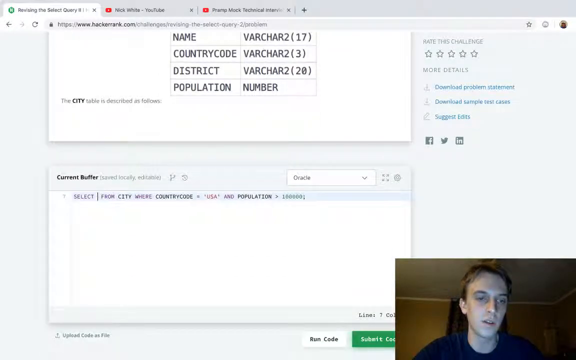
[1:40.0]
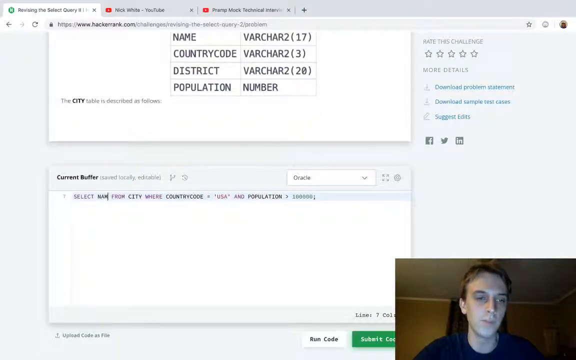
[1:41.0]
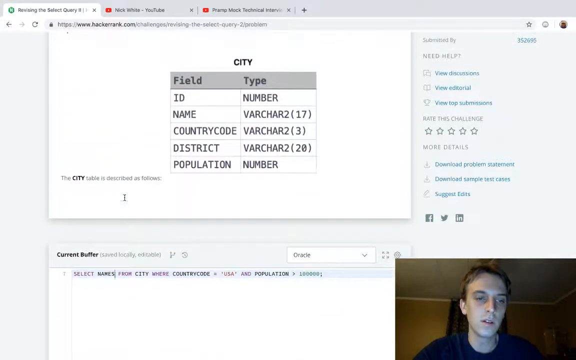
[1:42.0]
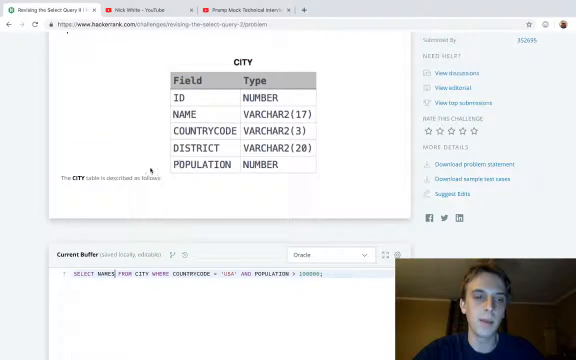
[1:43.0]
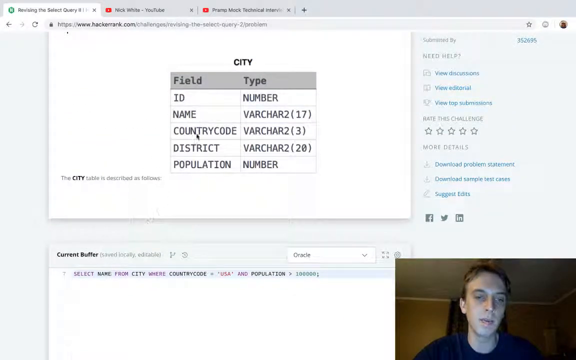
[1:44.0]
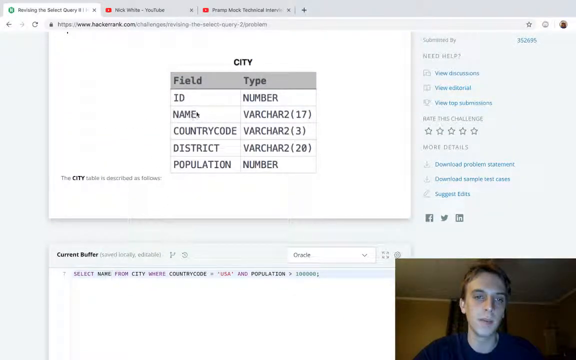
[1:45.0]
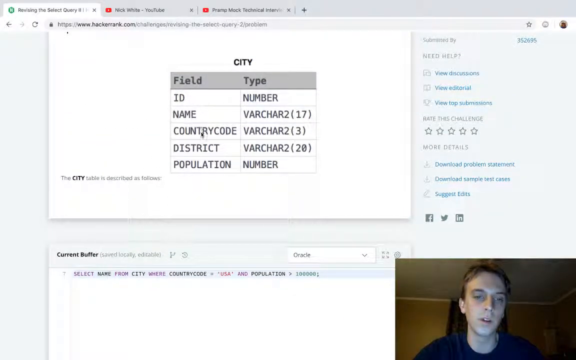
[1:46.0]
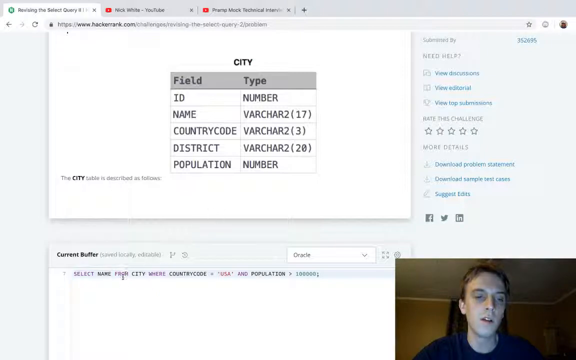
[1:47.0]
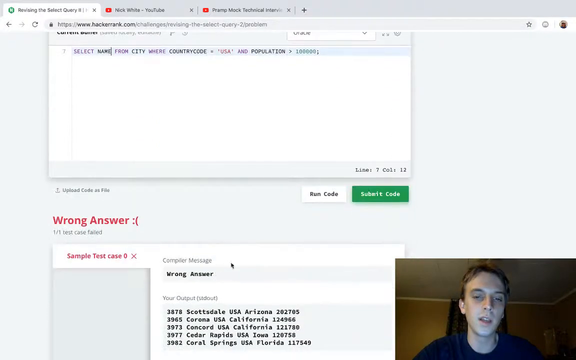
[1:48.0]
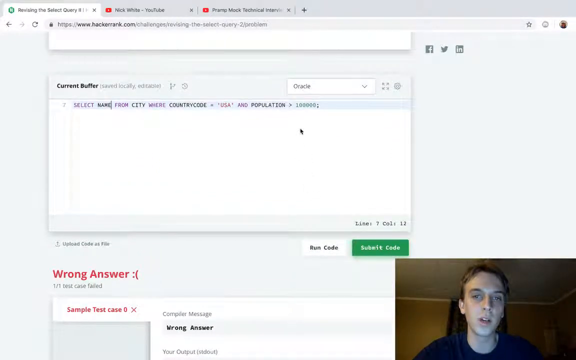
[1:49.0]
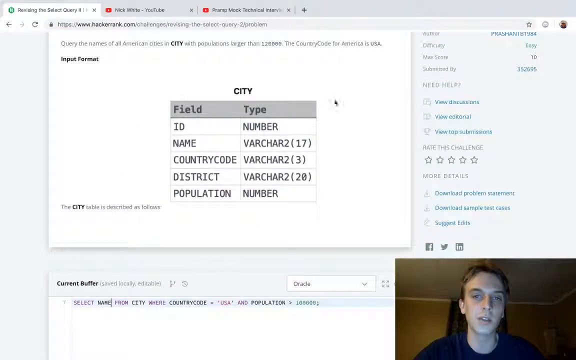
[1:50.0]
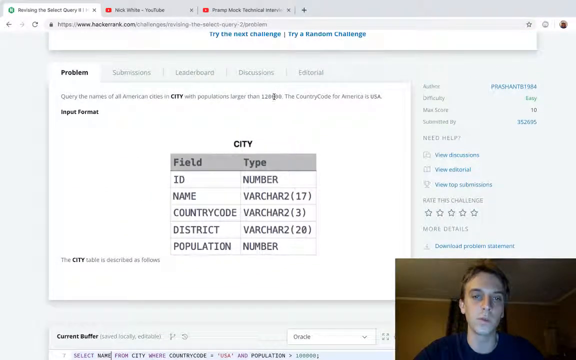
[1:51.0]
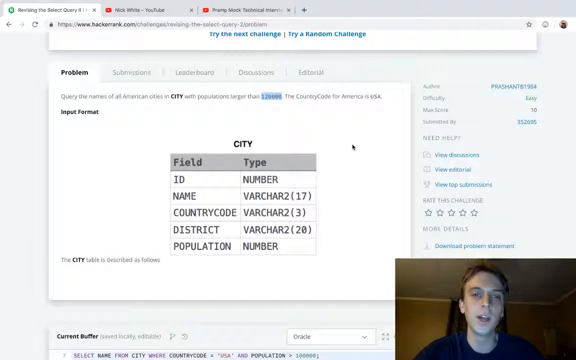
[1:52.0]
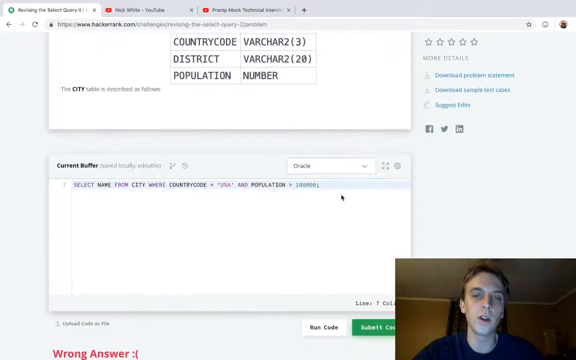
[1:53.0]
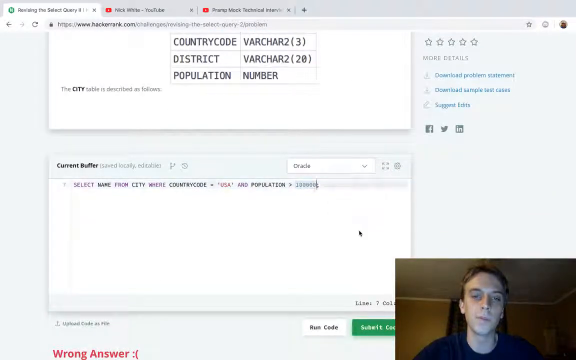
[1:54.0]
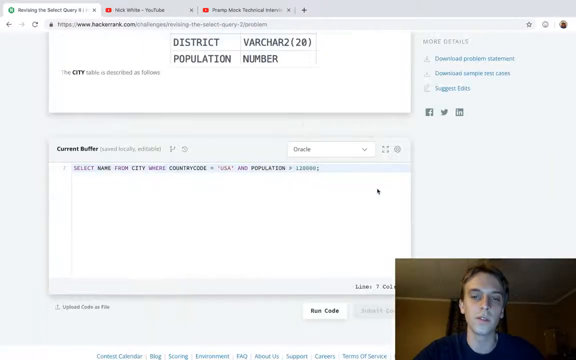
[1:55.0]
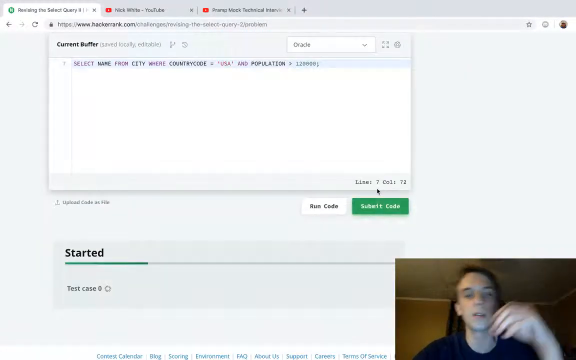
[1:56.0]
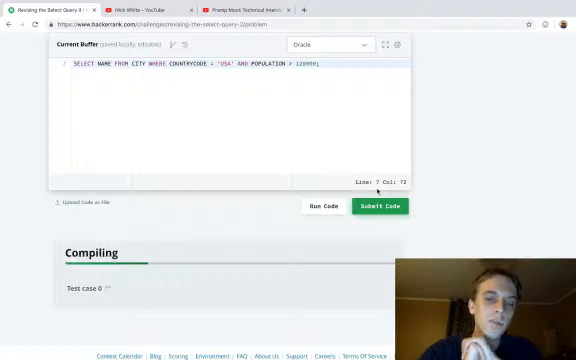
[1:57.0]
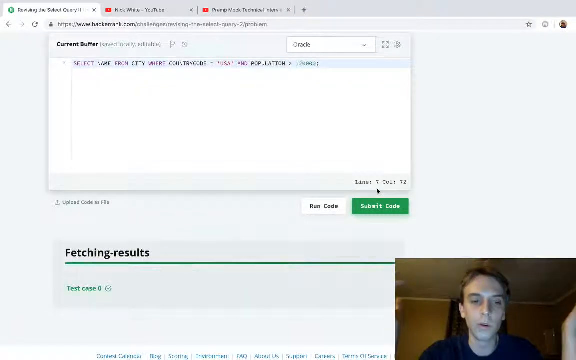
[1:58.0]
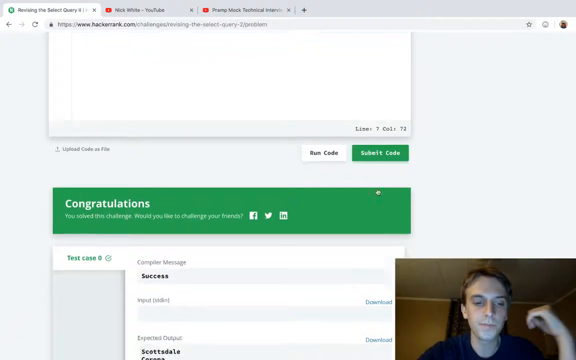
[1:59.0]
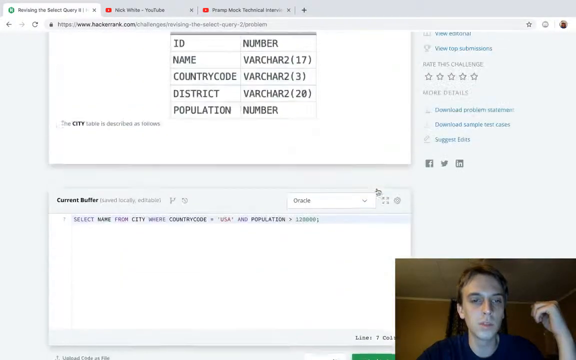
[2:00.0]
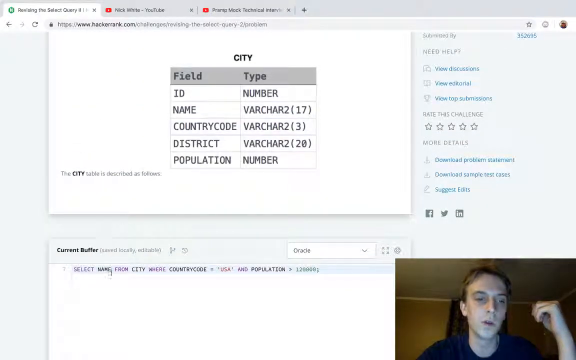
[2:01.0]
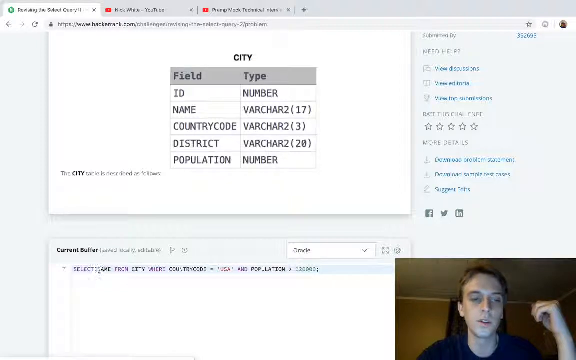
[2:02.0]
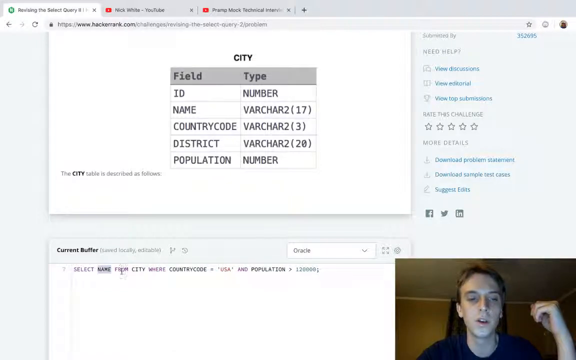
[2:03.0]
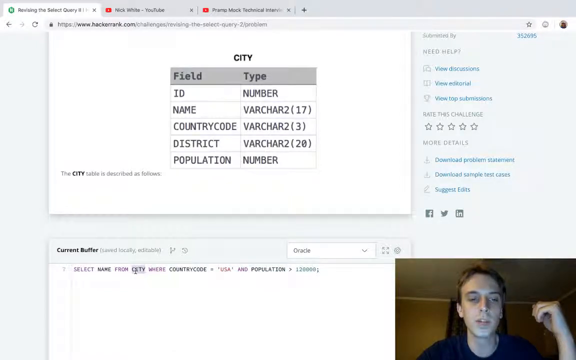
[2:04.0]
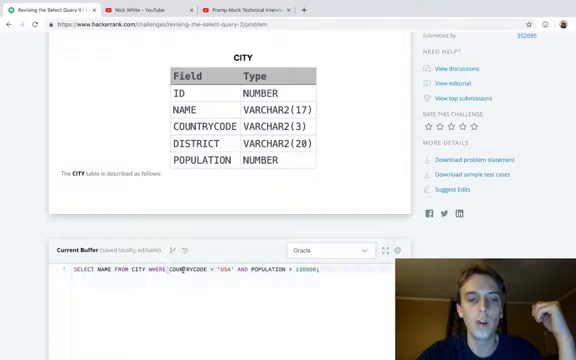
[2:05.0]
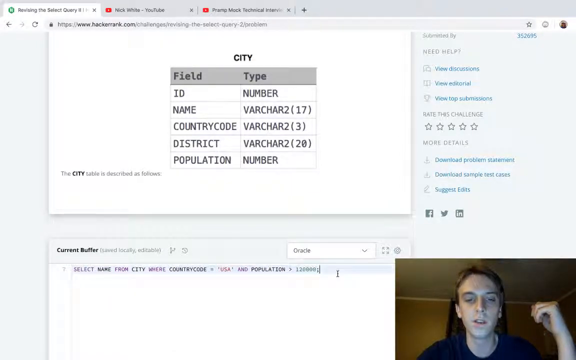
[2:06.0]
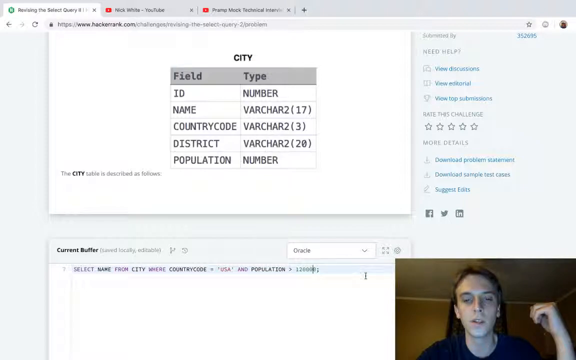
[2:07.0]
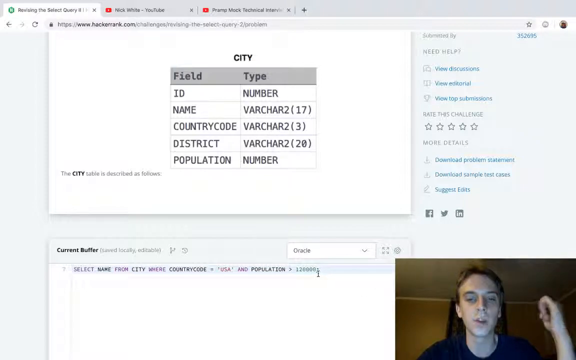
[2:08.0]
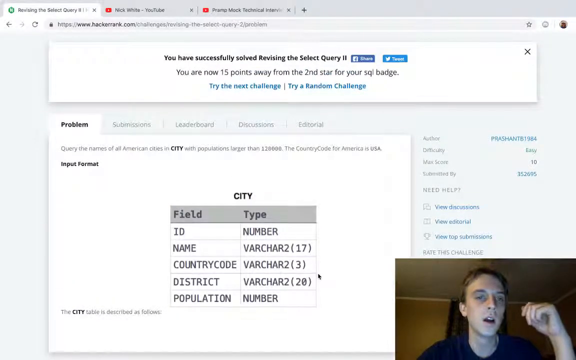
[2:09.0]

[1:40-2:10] The man talks, scrolls back up and moves the cursor over the country code field and type chart. He moves up and highlights something, then moves down and highlights something again, moving his hand a little. He apparently runs a new answer, seemingly copying and pasting a different response into the response space. He gets a congratulations screen: the response box, previously red, now glows green, and he talks over the correct response.